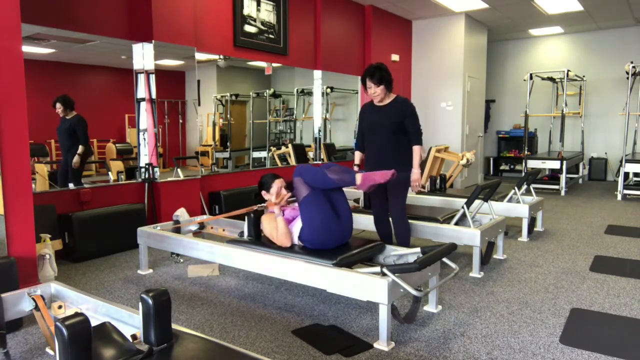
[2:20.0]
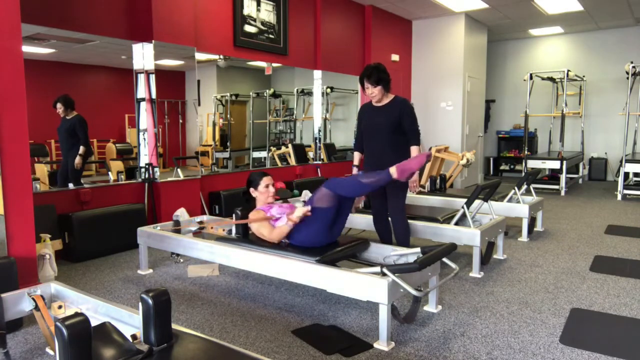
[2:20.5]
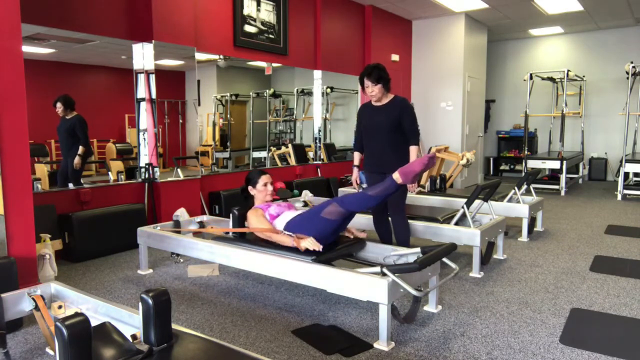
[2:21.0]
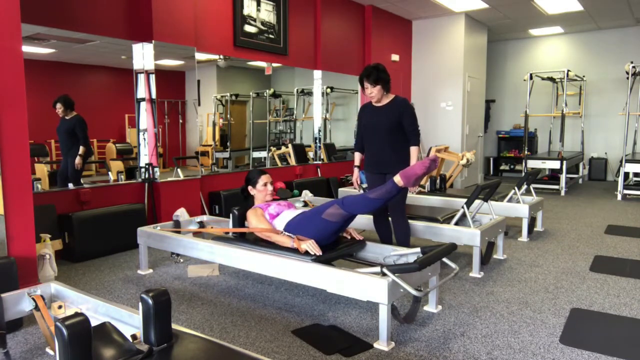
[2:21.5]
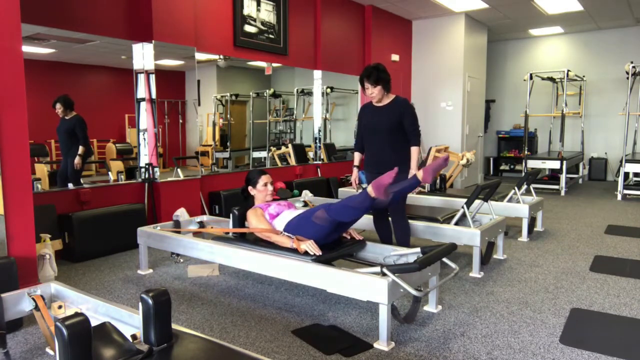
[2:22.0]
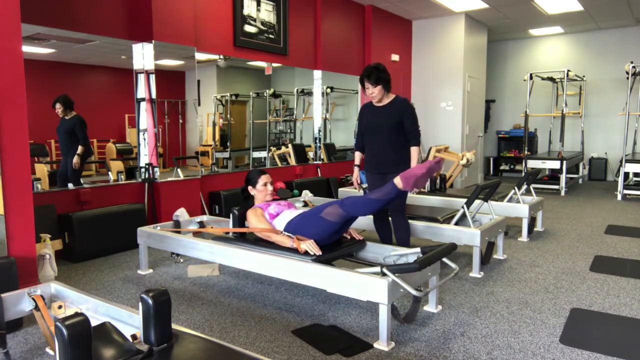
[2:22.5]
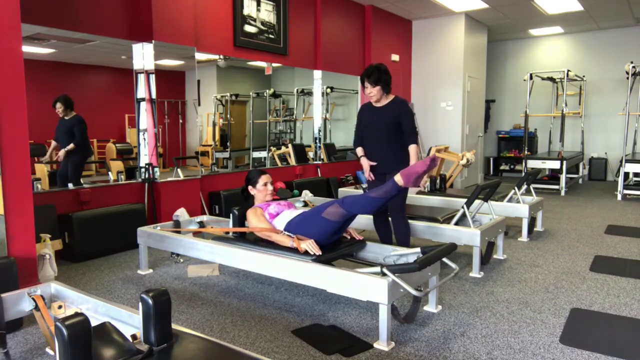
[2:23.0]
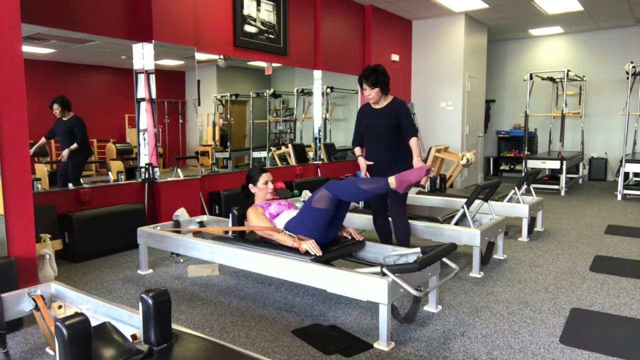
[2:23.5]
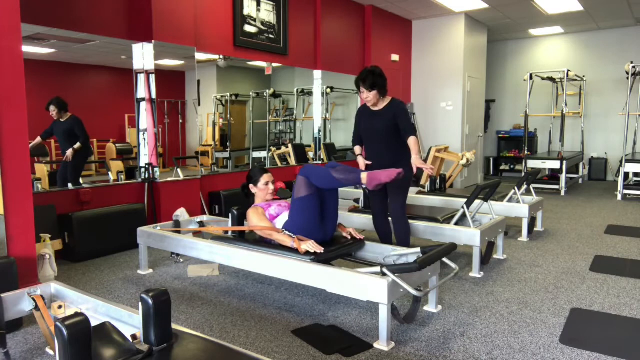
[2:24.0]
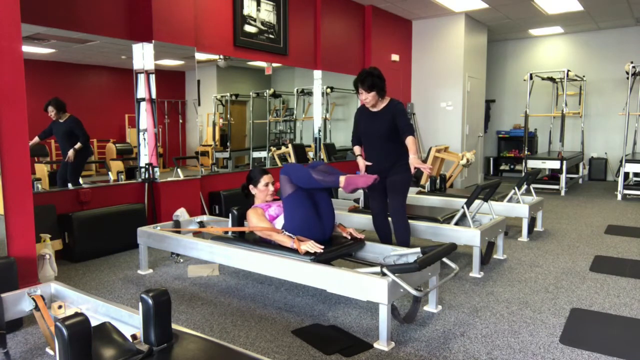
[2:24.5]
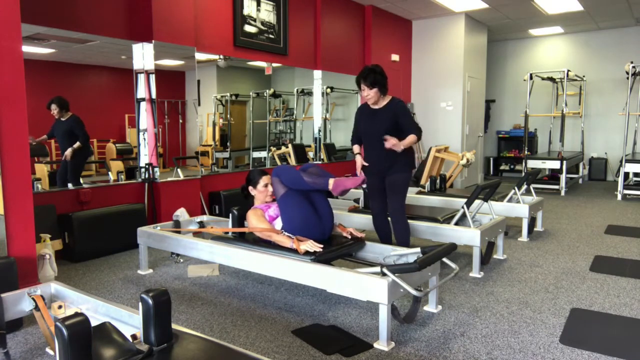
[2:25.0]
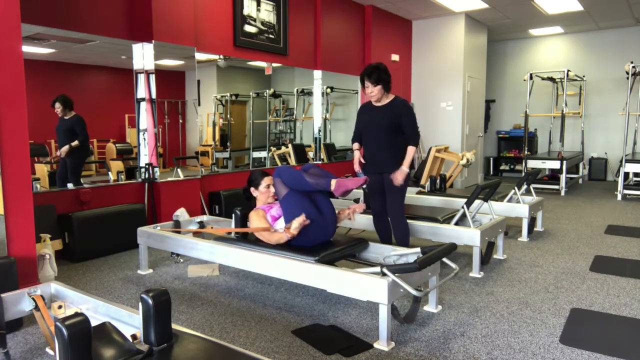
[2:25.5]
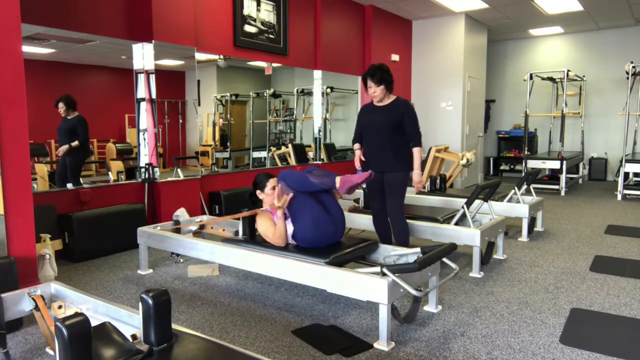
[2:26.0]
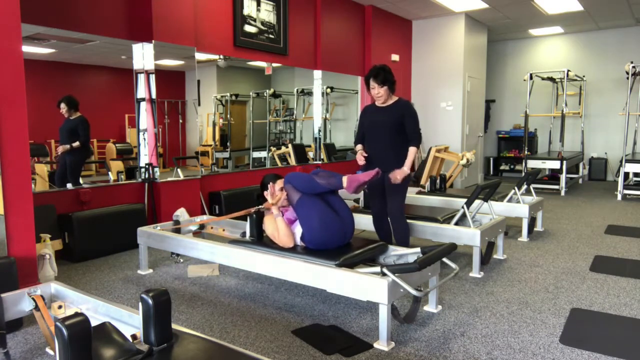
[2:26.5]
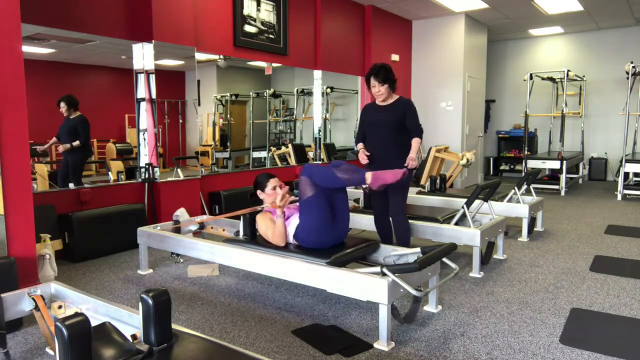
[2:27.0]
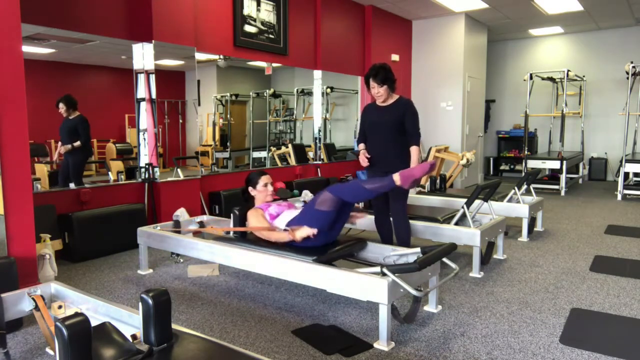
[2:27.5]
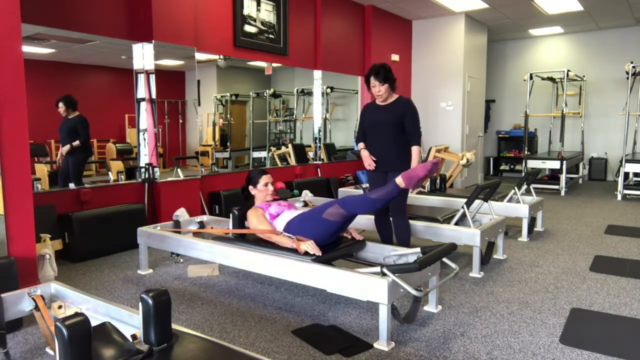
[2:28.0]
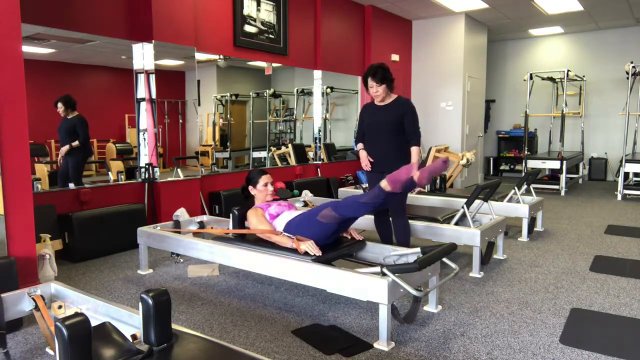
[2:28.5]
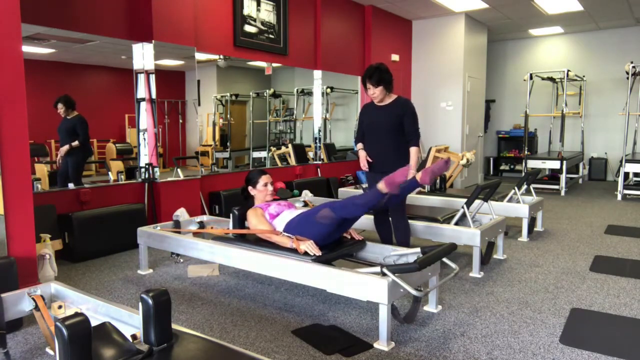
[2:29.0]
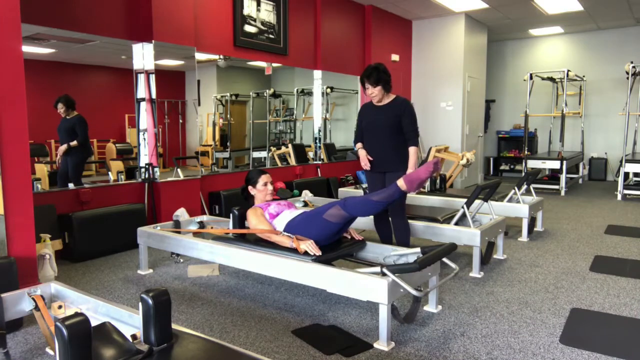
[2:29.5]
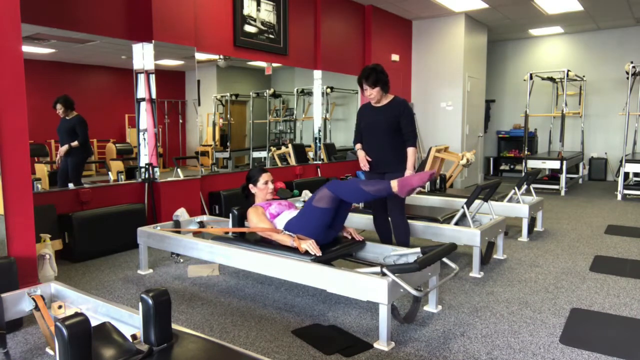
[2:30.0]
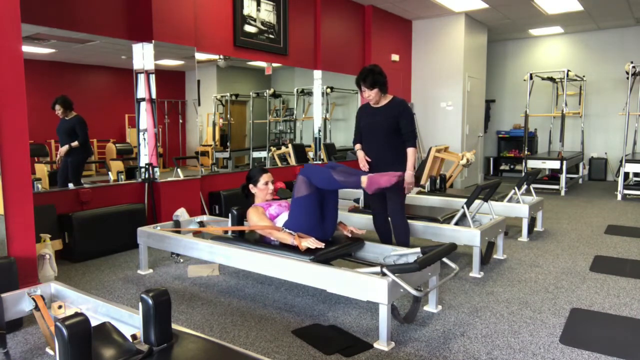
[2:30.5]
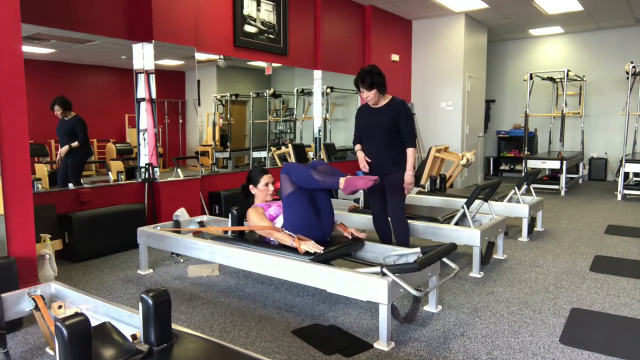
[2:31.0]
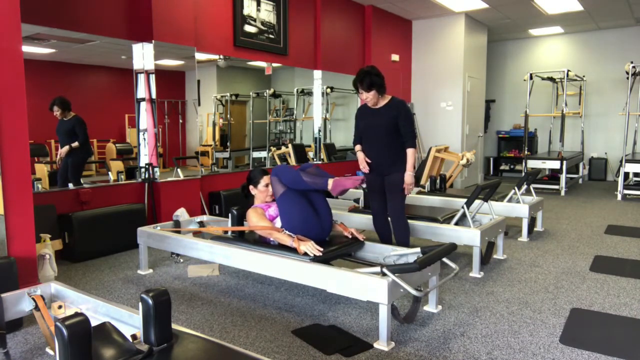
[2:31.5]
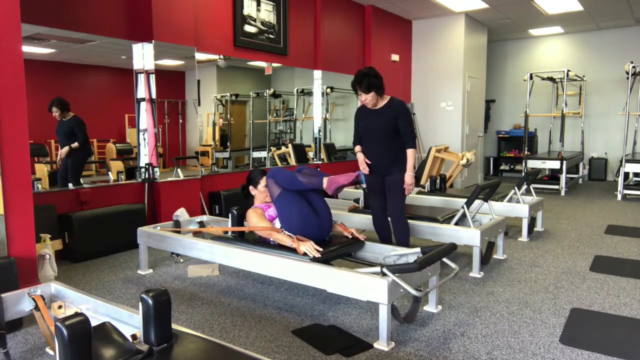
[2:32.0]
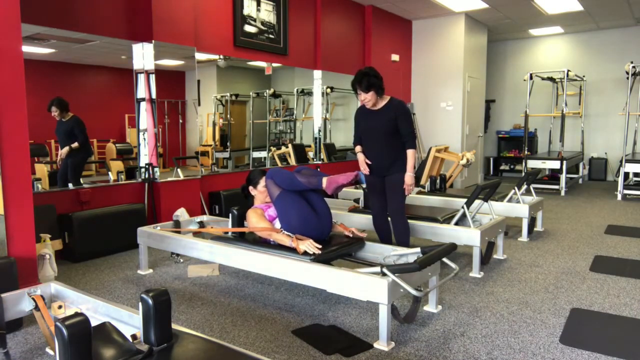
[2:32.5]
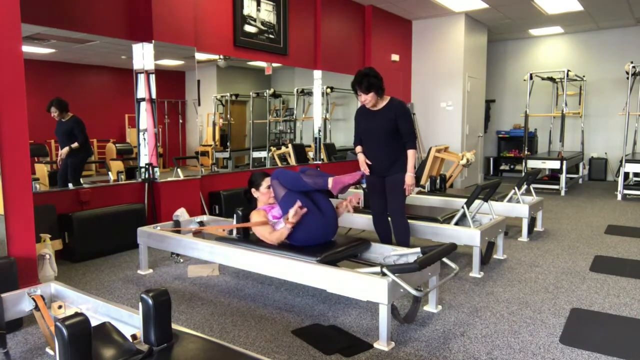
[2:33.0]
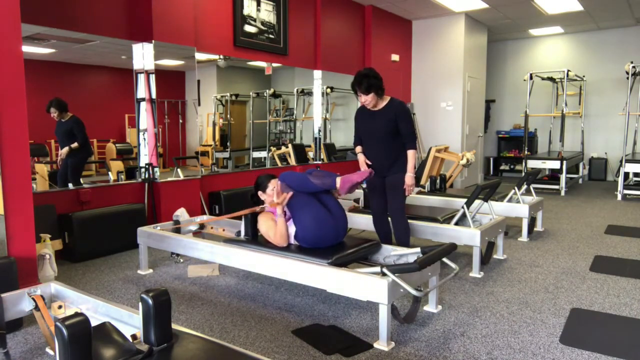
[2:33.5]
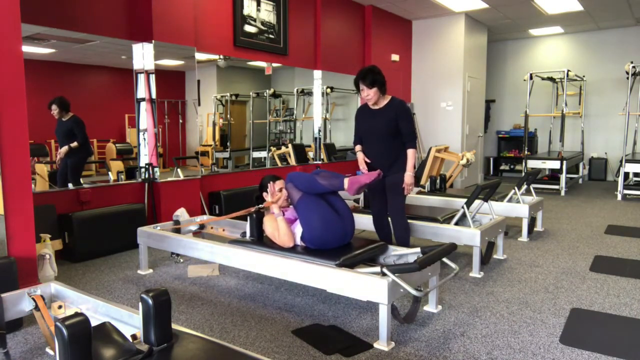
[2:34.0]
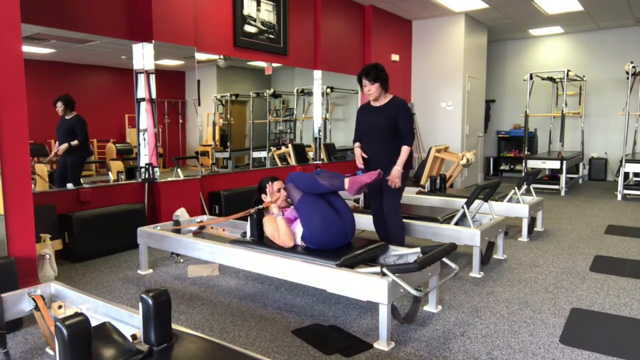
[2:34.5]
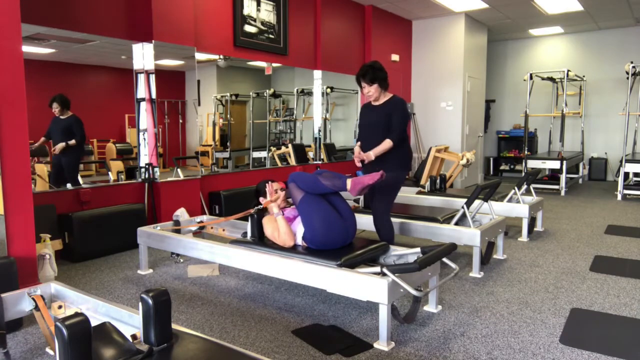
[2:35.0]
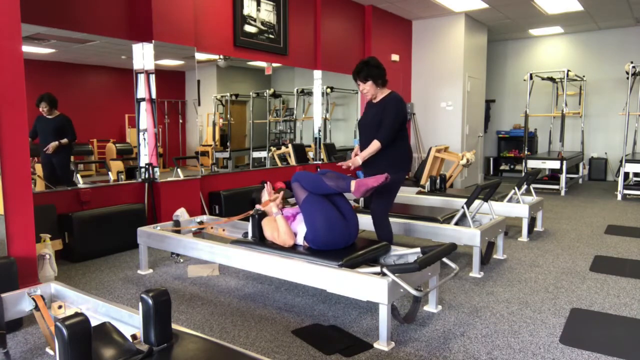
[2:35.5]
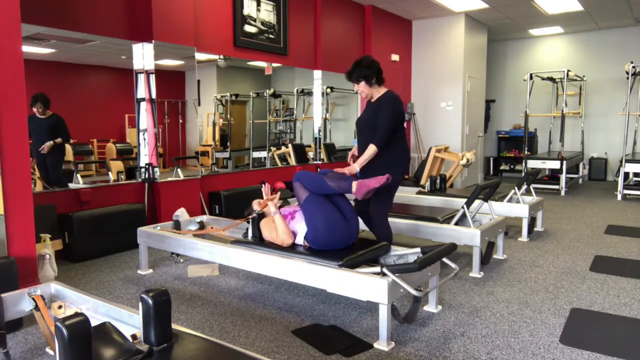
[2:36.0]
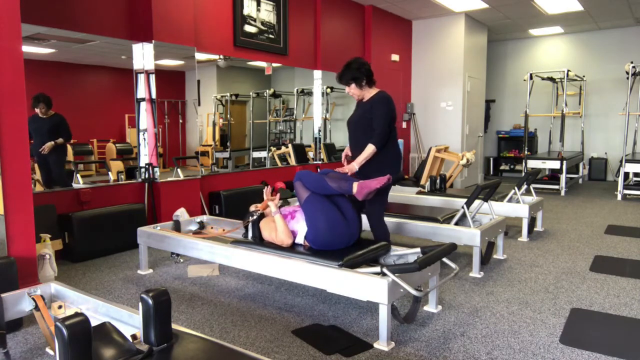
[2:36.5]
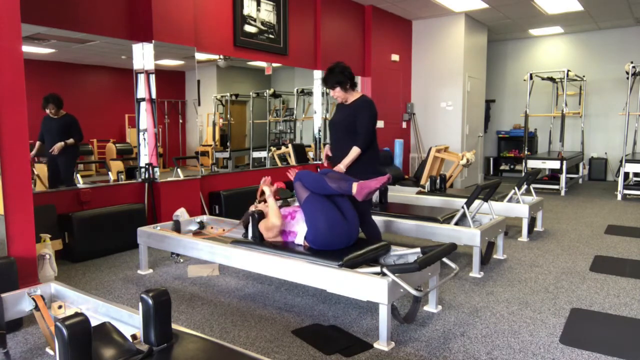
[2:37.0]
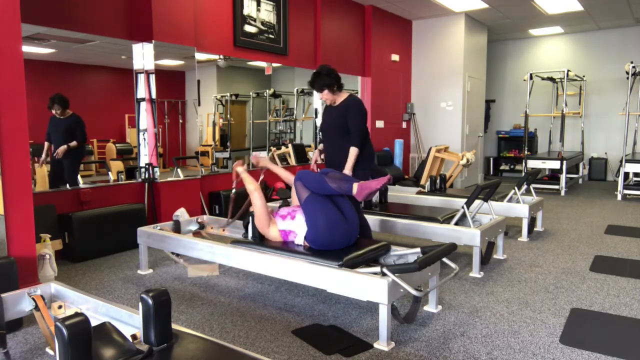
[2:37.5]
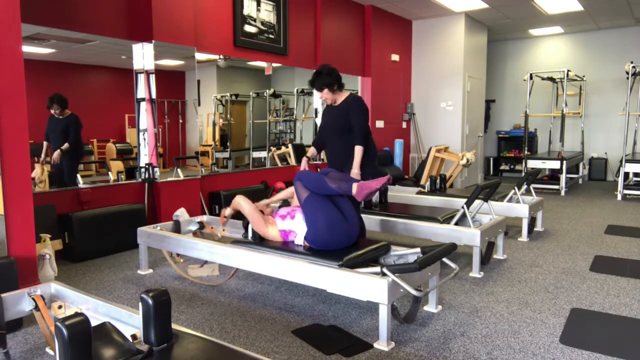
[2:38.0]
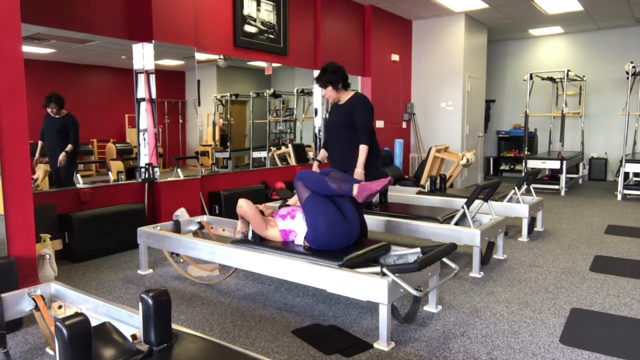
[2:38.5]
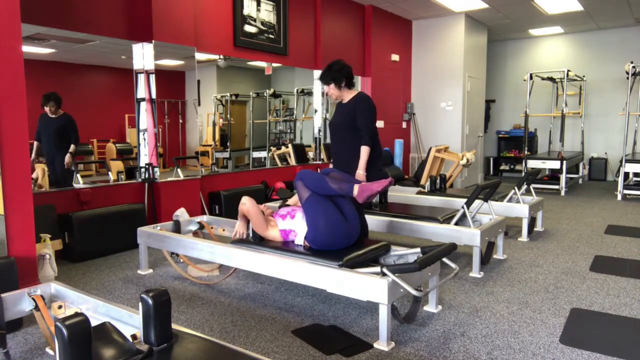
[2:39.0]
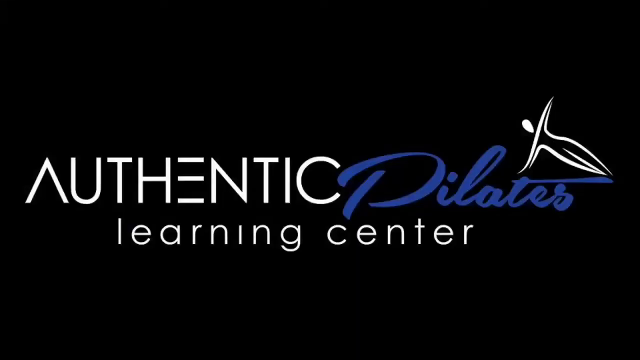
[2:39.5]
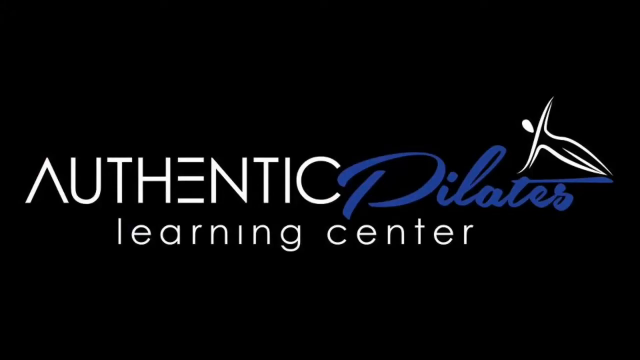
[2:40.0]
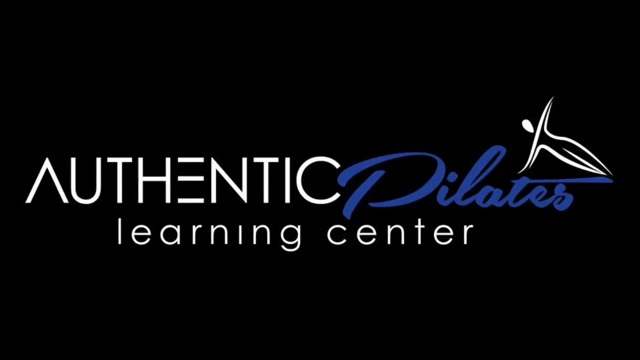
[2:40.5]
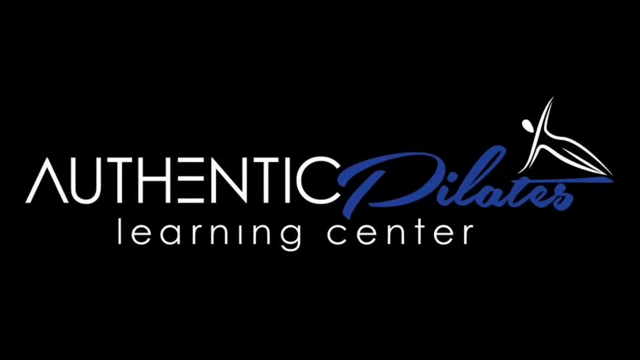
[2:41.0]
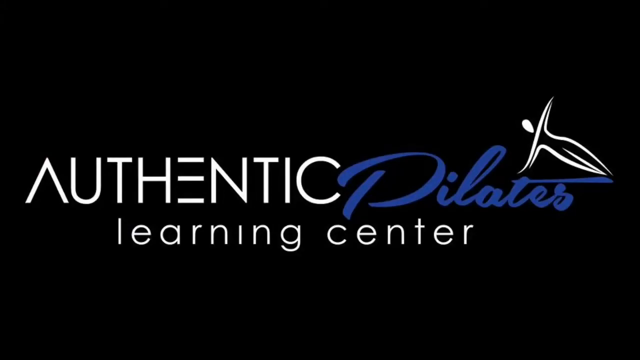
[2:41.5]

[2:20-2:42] In the Pilates studio with reformers lined up in front of a red mirrored wall, a woman is on a reformer in the foreground while a female instructor standing next to the reformer behind her guides her movements. The woman has her back on the carriage and her head raised, extending her legs out in front of her with her legs lifted. Her hands are in the loops of the reformer bands, and she pushes them down to rest on the carriage as her legs extend in front of her. She moves her feet out and together in a scissors kick motion, then bends her legs, bringing her knees toward her face, and lifts her hands off the carriage, which causes the carriage to move down slightly. She performs the action again: stretching her legs in front of her, a scissors kick, then bending her knees back toward her face and lifting her hands off the carriage. When she is done, she rests her head on the carriage and the instructor rests her hands on her knees. The video ends with a title card that reads "Authentic Pilates Learning Center."